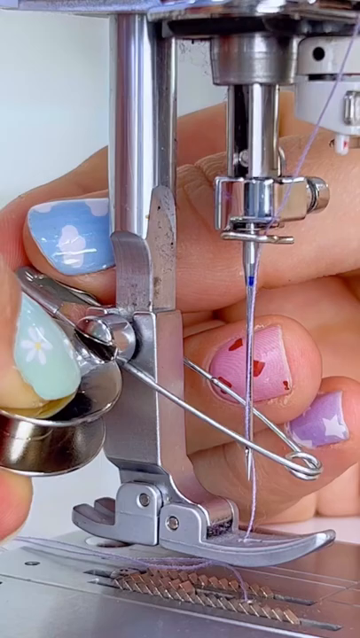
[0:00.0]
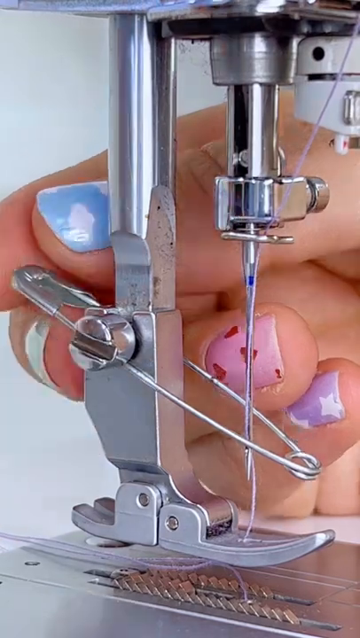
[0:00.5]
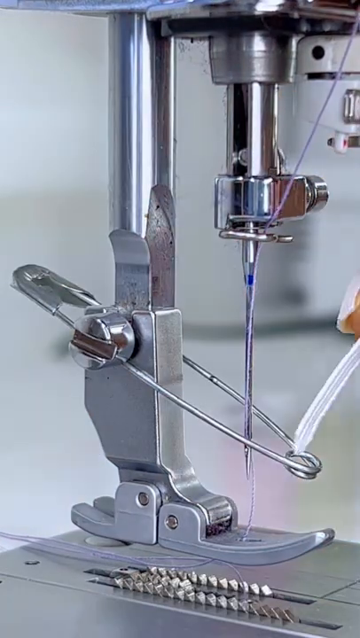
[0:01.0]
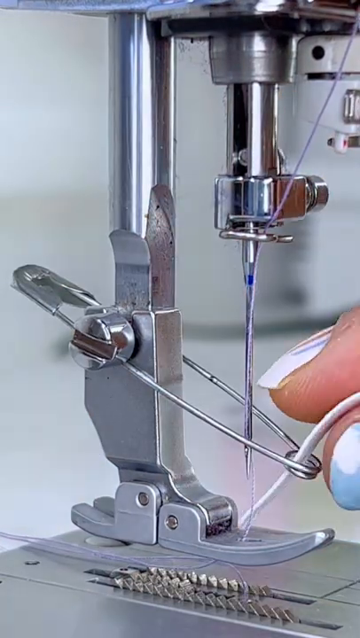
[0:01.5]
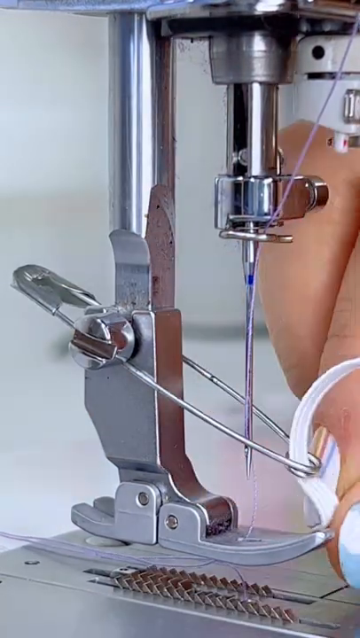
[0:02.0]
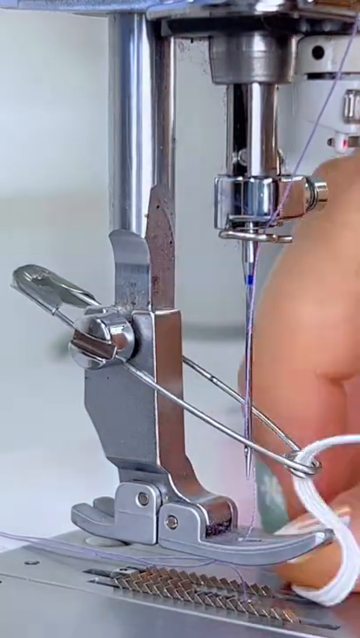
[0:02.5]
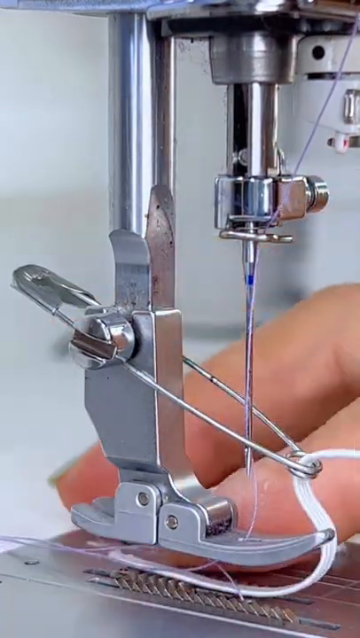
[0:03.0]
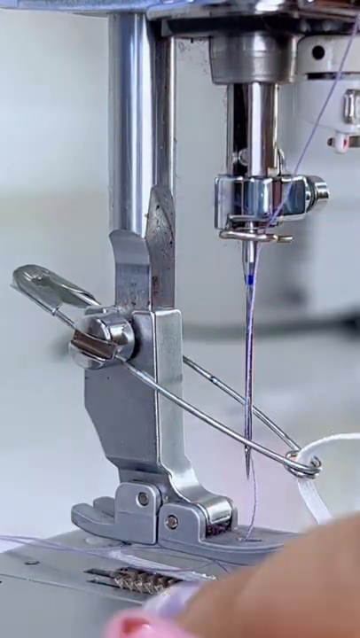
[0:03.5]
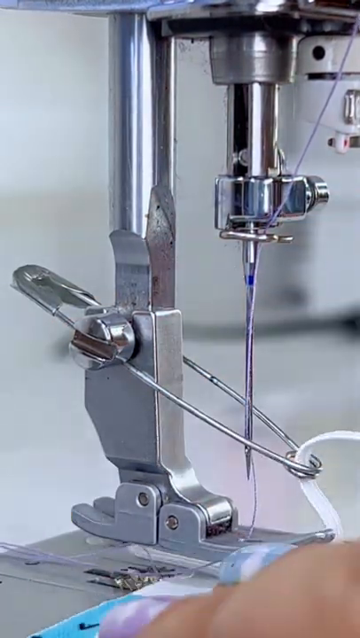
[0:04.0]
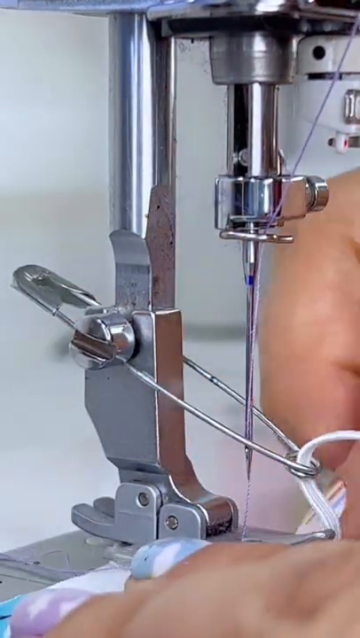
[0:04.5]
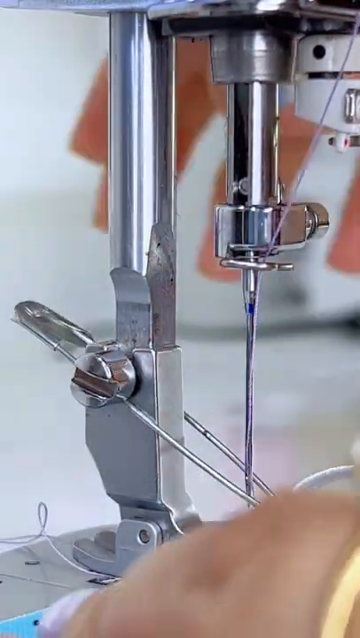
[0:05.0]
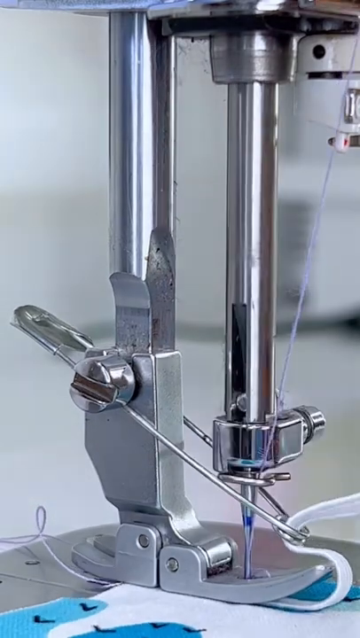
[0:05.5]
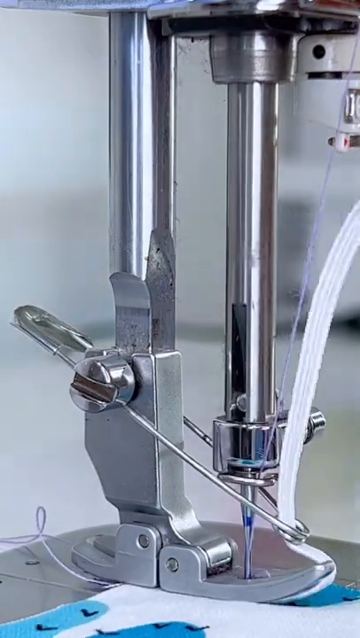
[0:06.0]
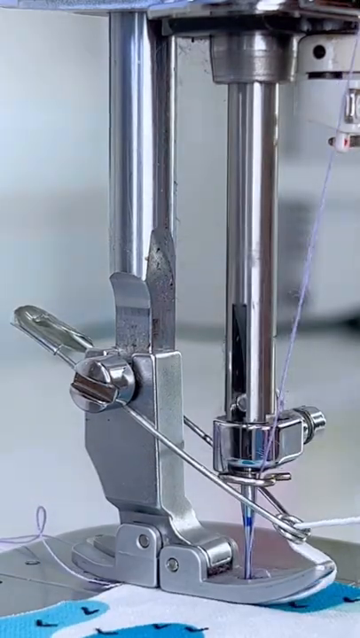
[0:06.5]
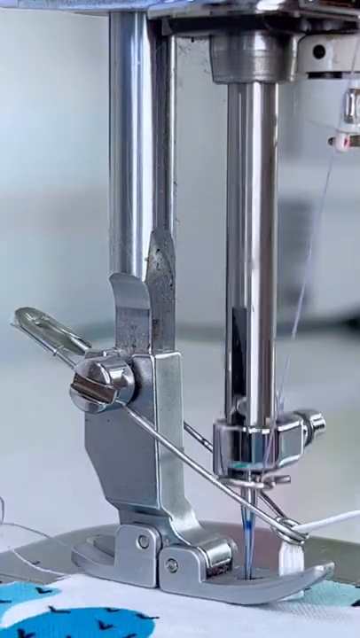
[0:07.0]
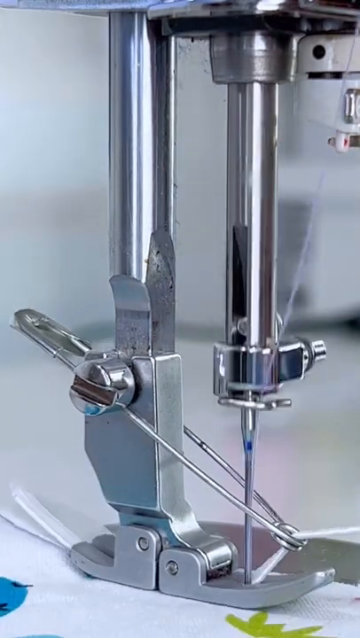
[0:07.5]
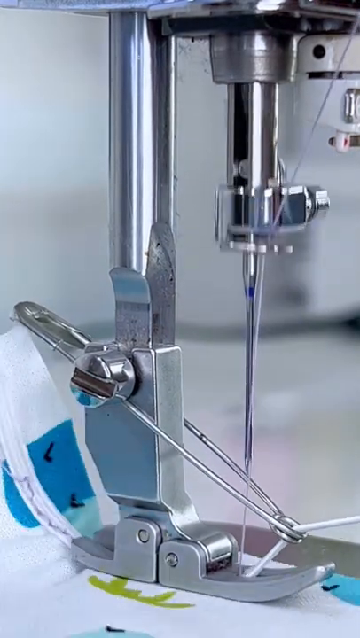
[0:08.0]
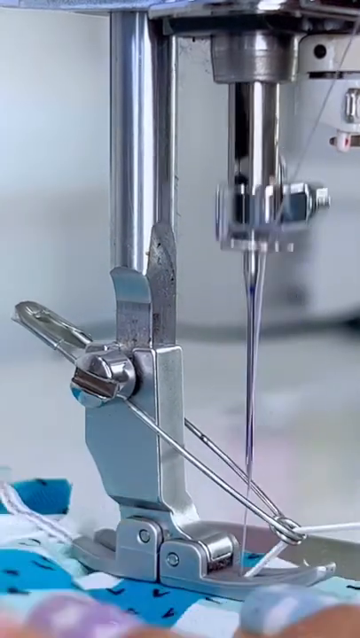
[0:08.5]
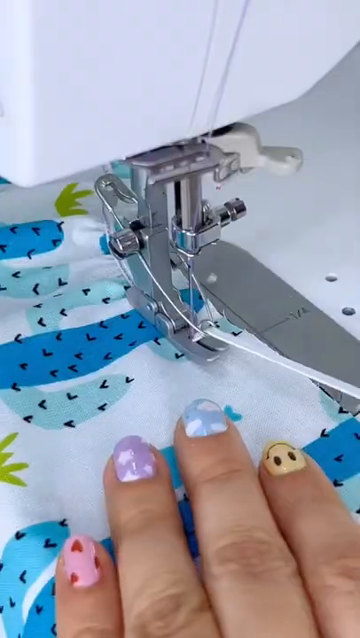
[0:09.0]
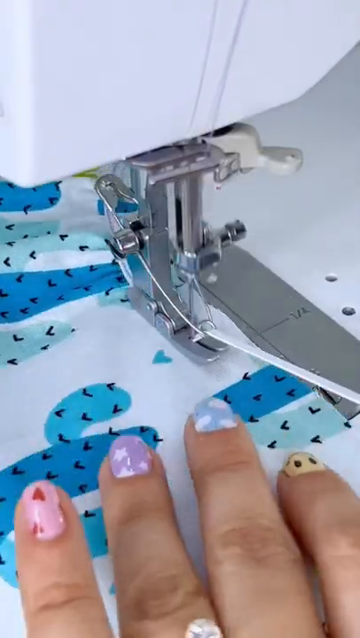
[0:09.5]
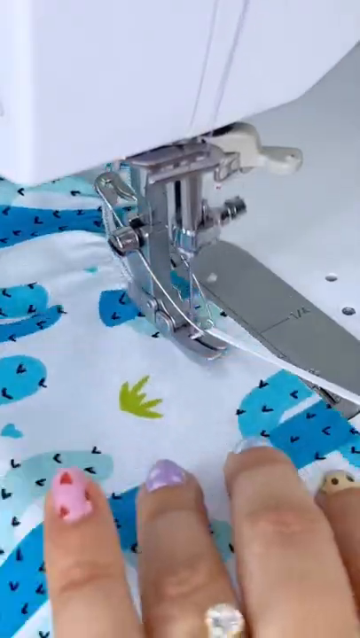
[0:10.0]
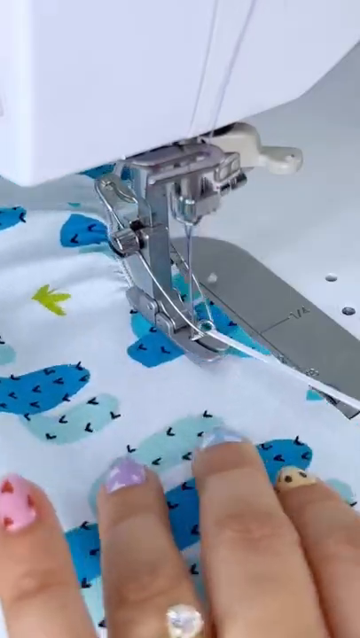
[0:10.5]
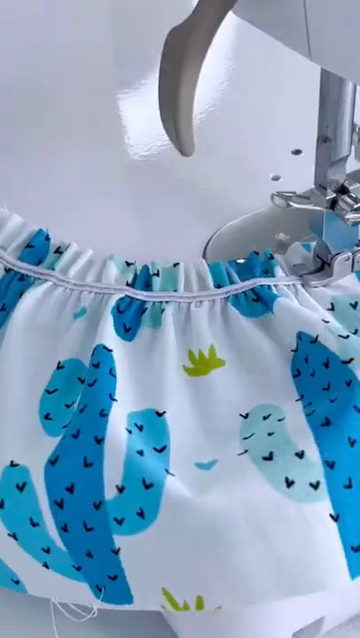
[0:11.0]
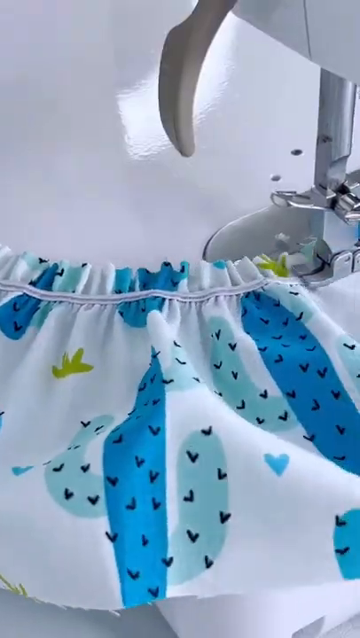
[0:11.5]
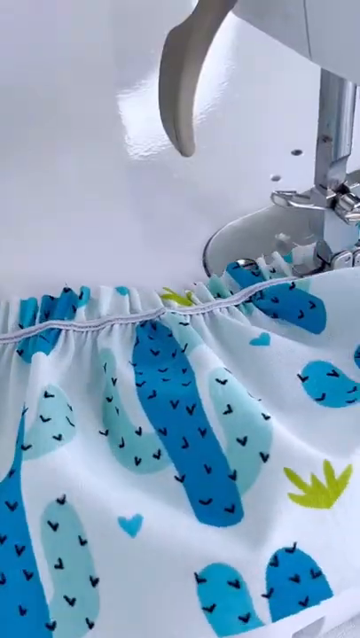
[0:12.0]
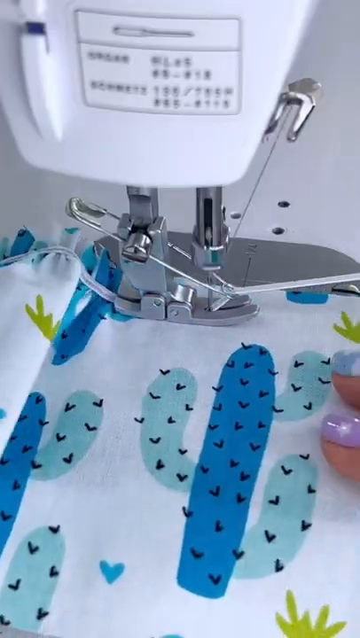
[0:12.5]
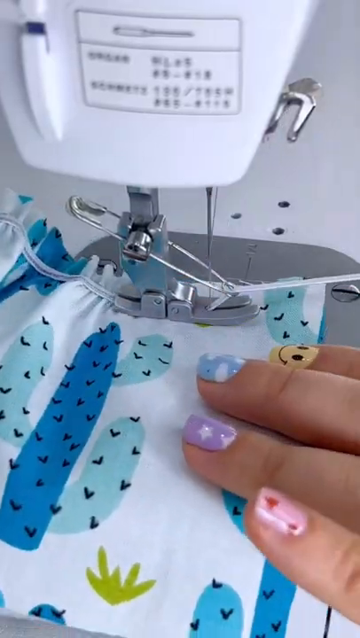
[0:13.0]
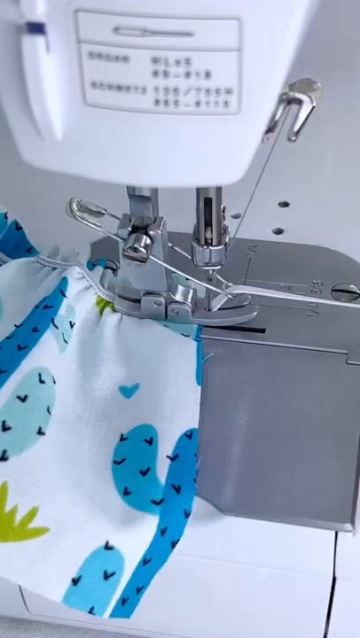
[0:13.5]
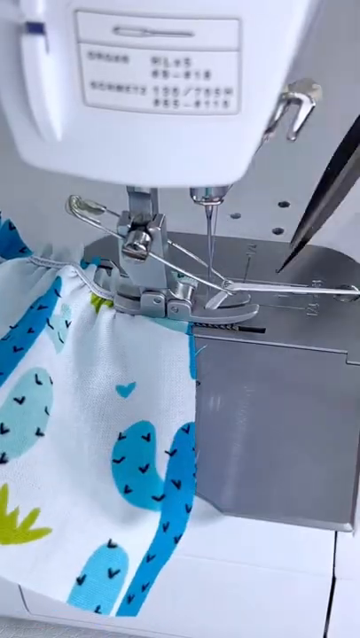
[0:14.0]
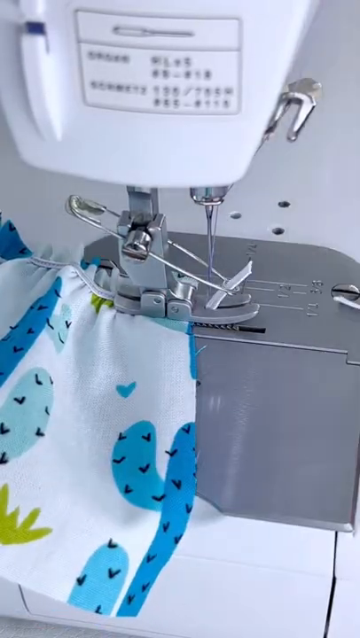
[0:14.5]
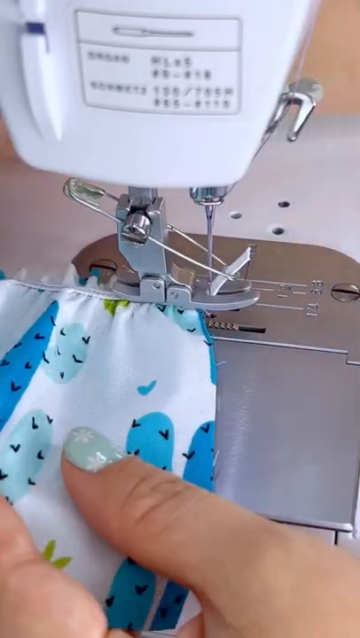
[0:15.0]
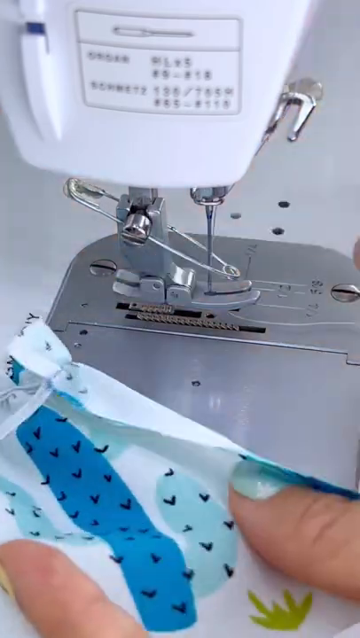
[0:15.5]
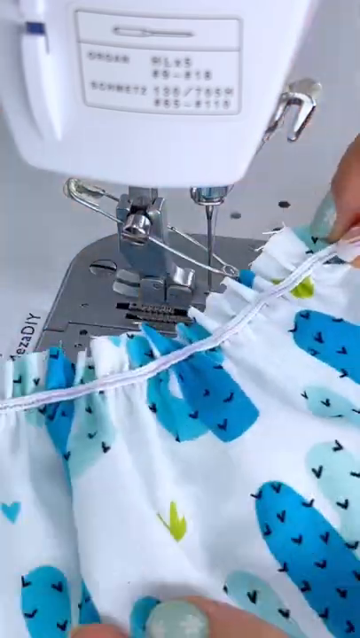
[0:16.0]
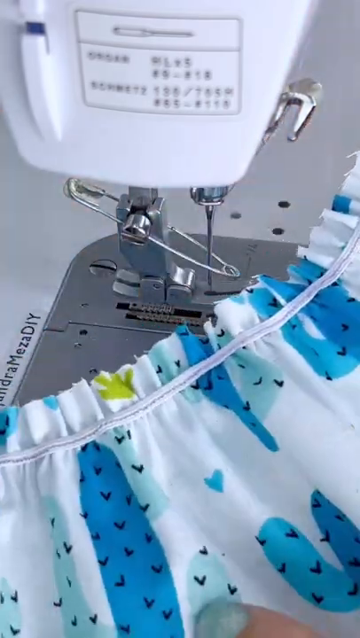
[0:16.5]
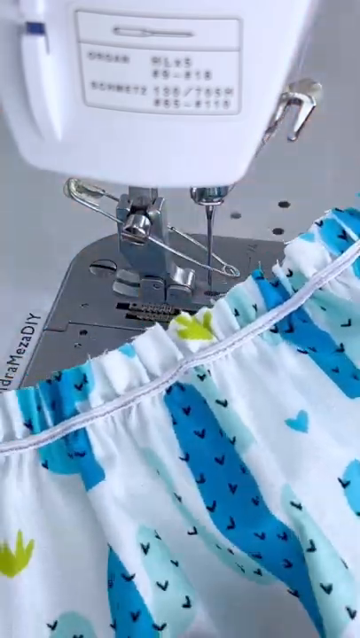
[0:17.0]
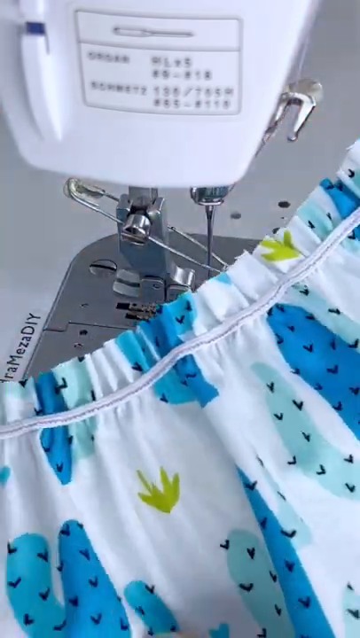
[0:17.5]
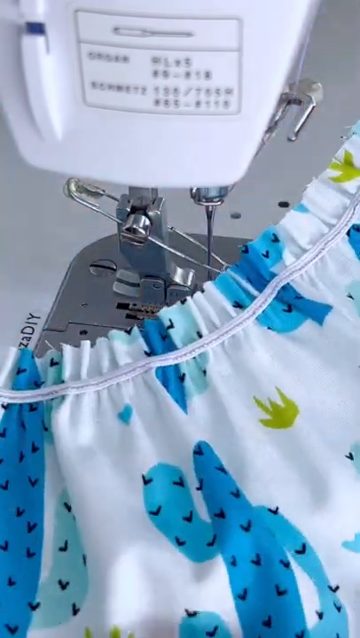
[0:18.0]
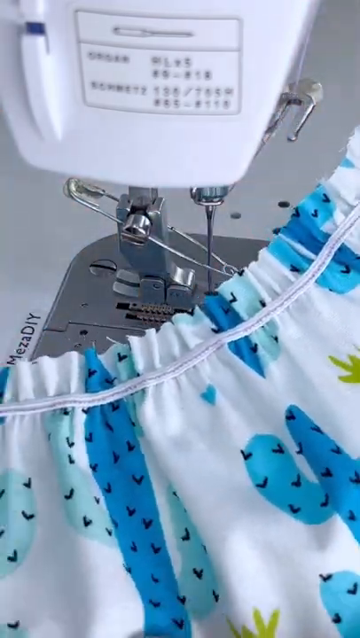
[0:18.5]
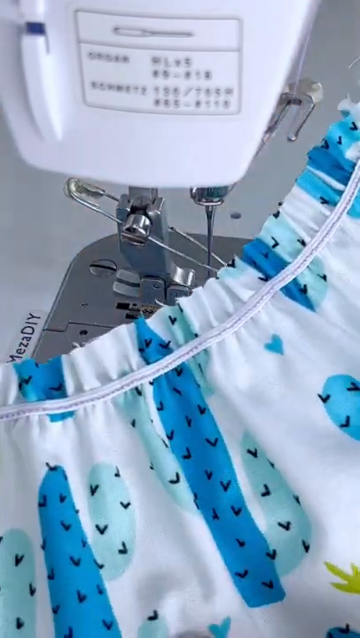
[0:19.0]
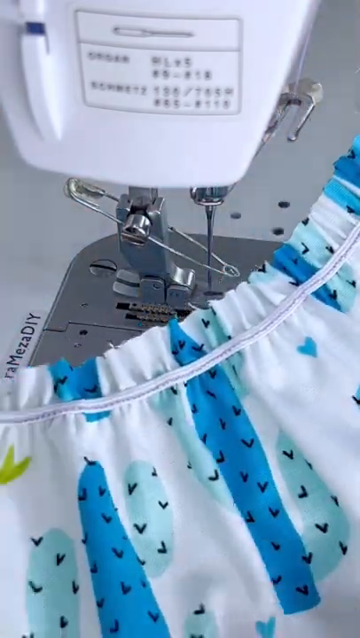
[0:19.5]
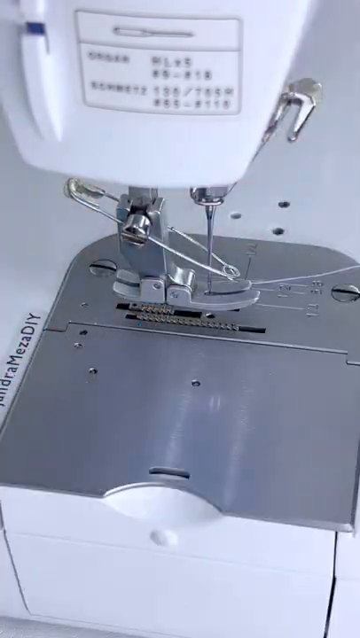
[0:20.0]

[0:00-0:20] Someone is using a metal sewing machine to sew a fabric printed with blue cactuses; it is unclear whether the fabric is an article of clothing or something else. The sewing machine is mainly silver with white at the top. The person sewing is probably a woman, as her fingernails are painted in different colors with little designs on them. The cactuses are blue, in a regular blue and a teal blue, and there are green plants on the fabric, which has a mainly white background. The sewing machine is putting a white lace along the top of the piece. The colors stand out on the white background of the fabric.